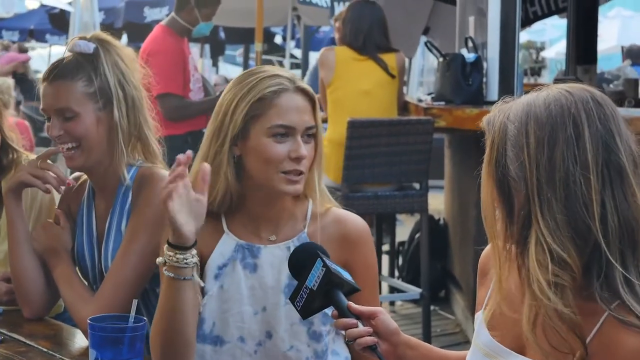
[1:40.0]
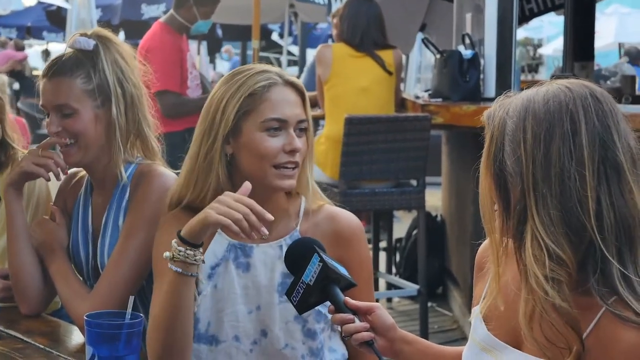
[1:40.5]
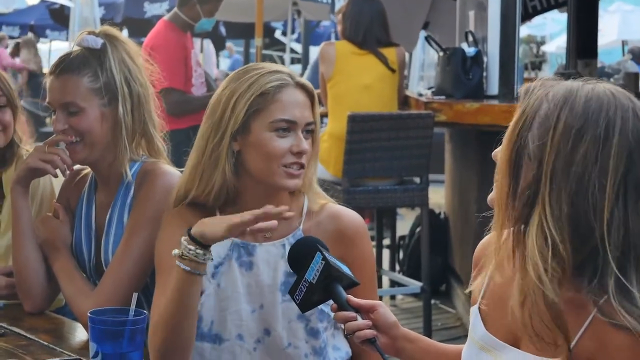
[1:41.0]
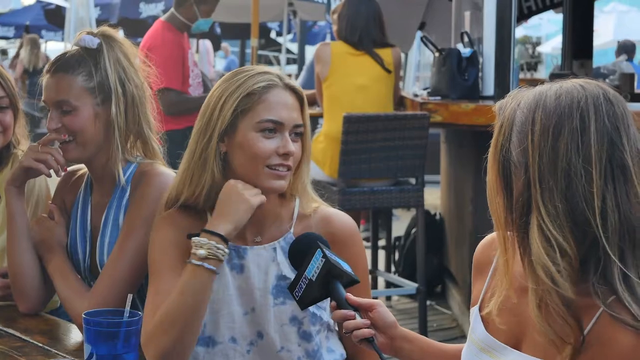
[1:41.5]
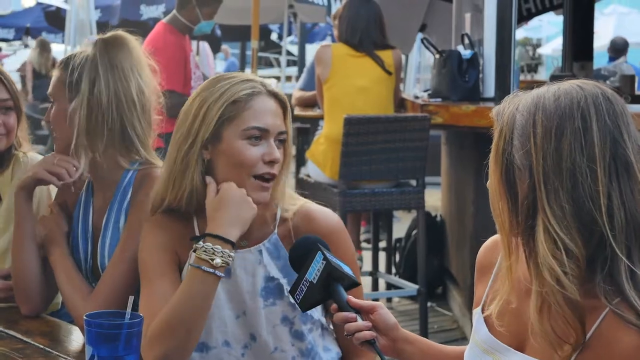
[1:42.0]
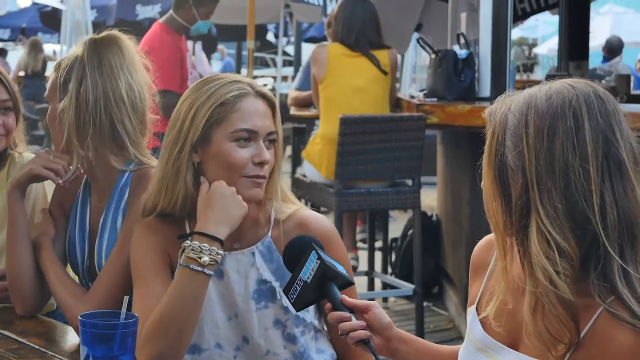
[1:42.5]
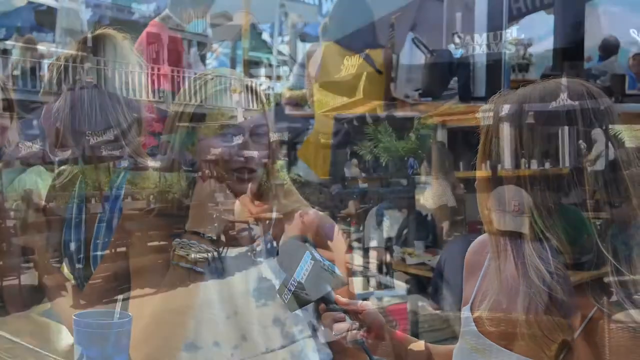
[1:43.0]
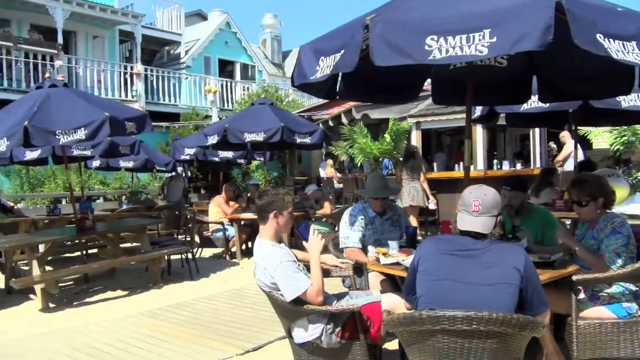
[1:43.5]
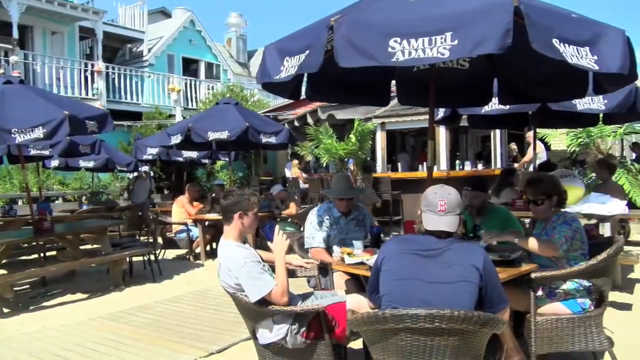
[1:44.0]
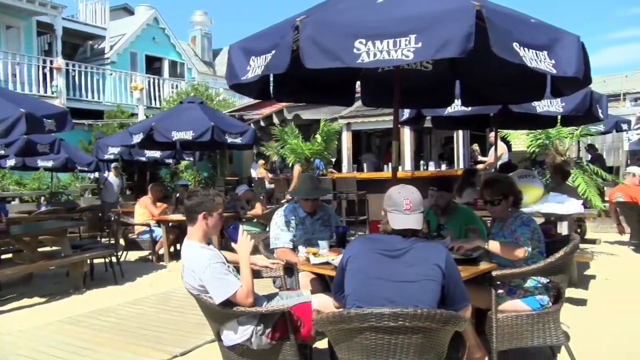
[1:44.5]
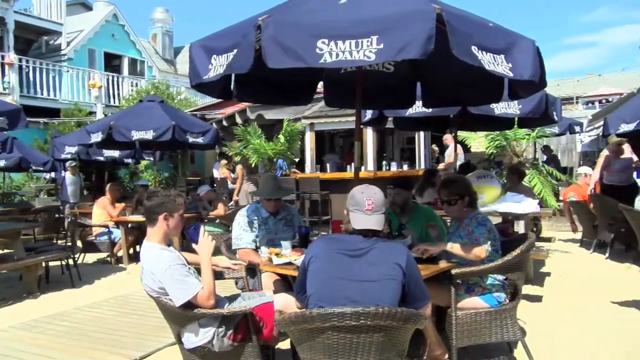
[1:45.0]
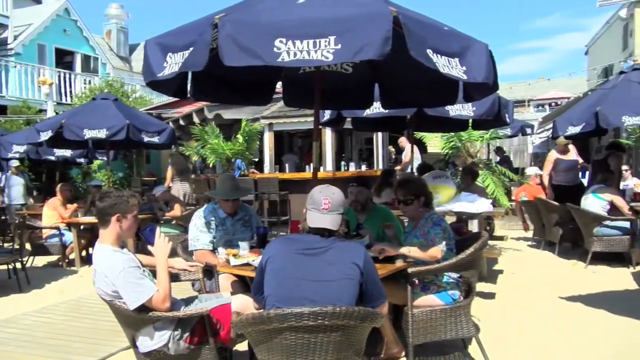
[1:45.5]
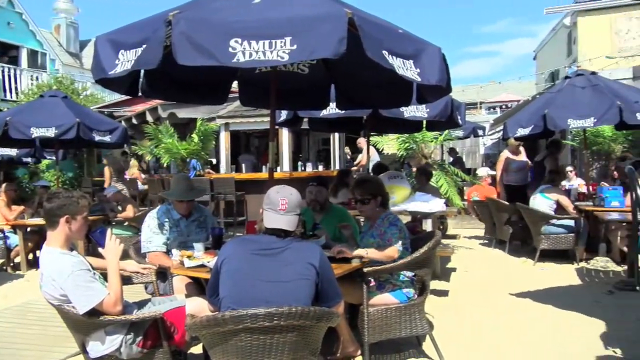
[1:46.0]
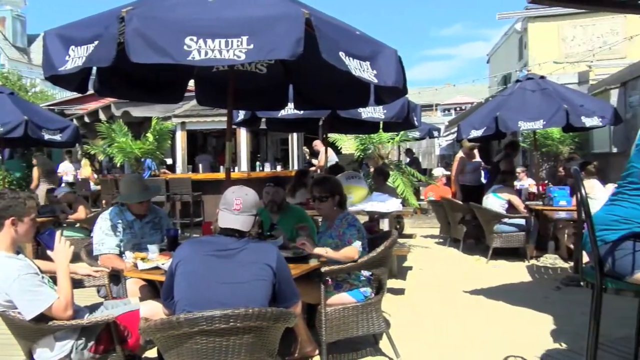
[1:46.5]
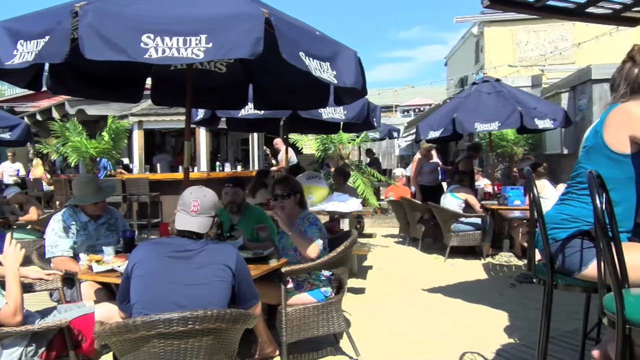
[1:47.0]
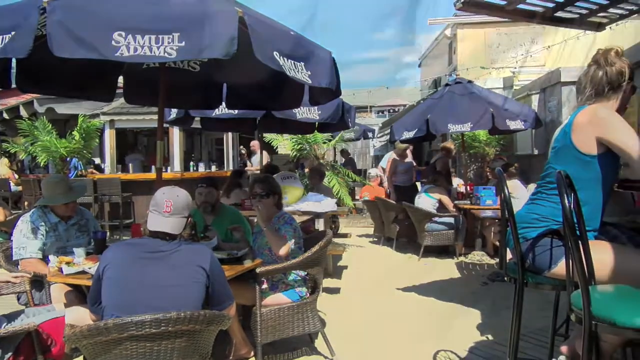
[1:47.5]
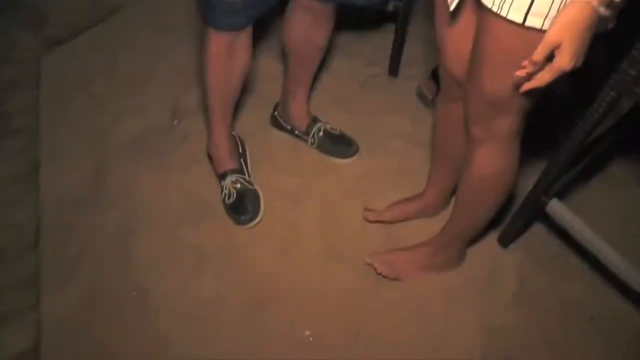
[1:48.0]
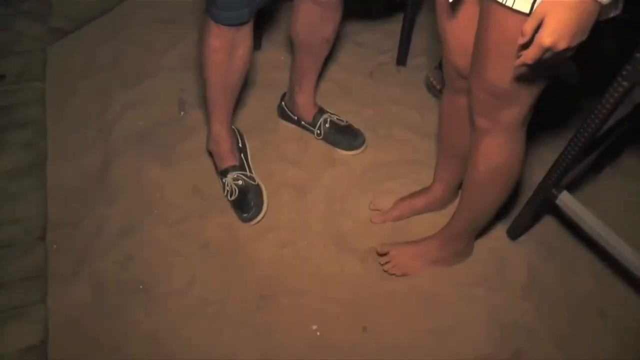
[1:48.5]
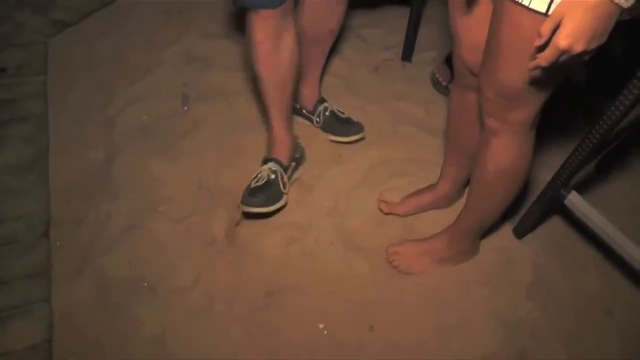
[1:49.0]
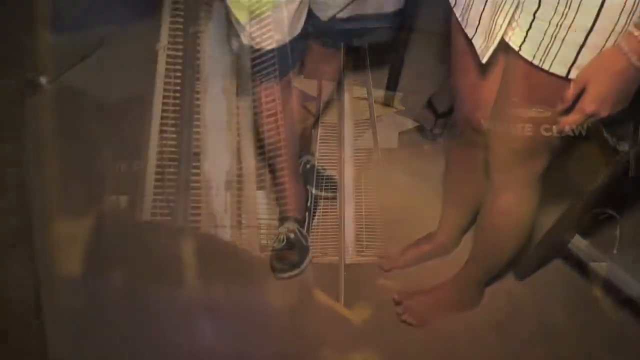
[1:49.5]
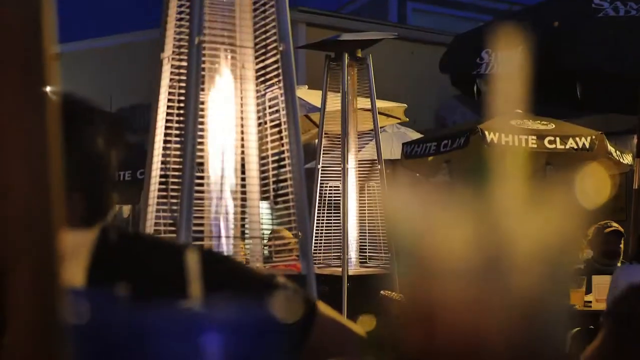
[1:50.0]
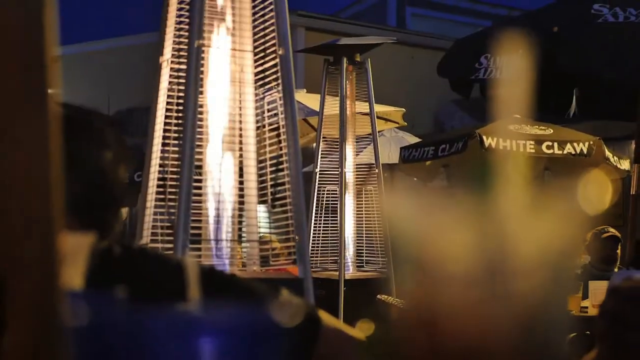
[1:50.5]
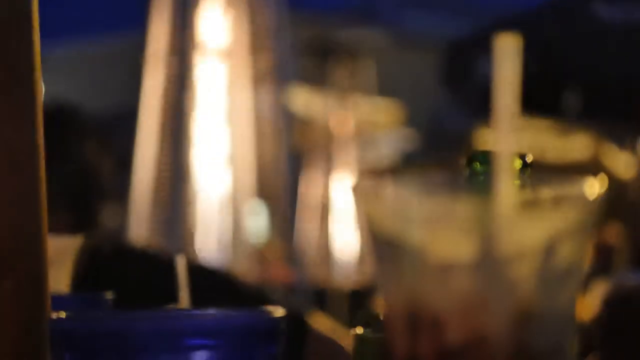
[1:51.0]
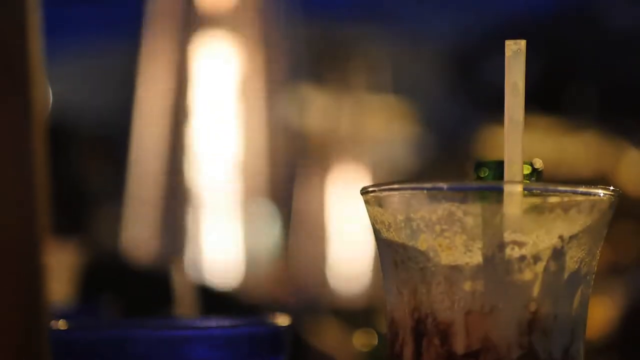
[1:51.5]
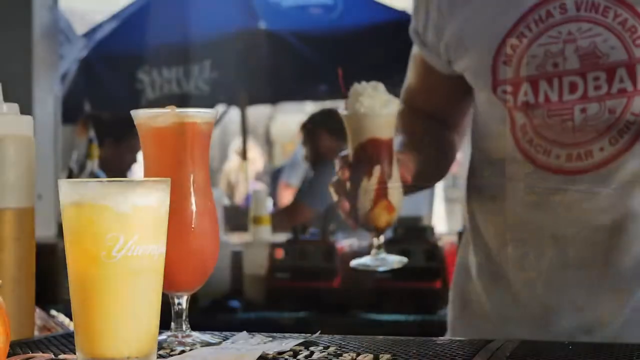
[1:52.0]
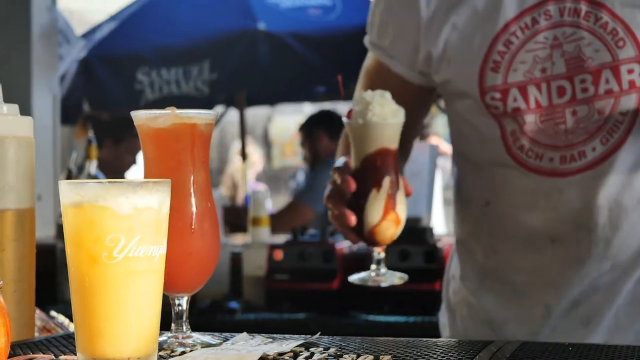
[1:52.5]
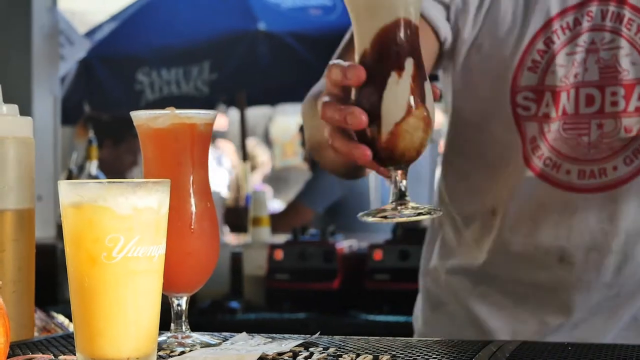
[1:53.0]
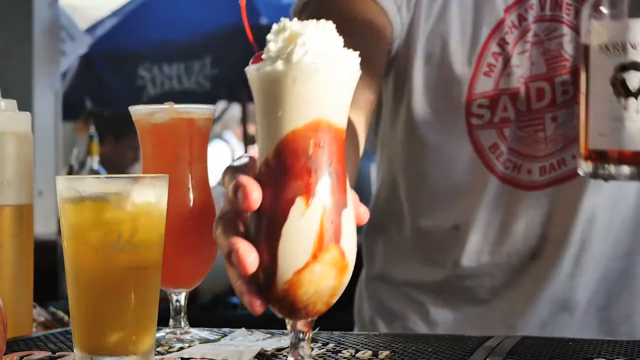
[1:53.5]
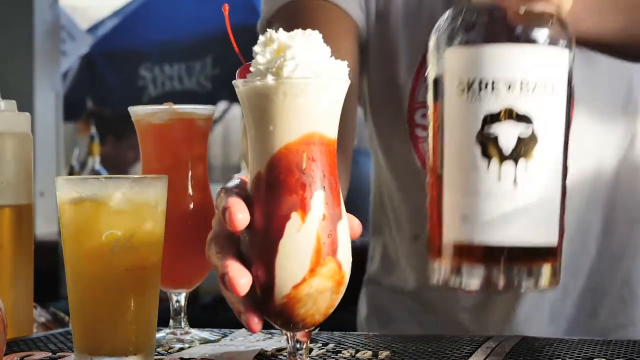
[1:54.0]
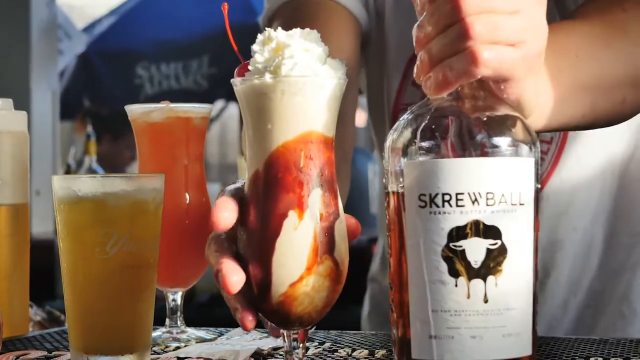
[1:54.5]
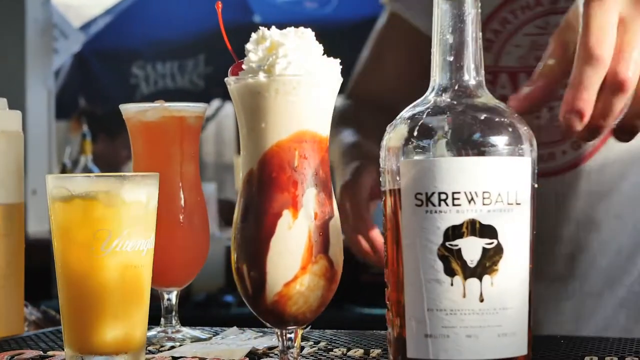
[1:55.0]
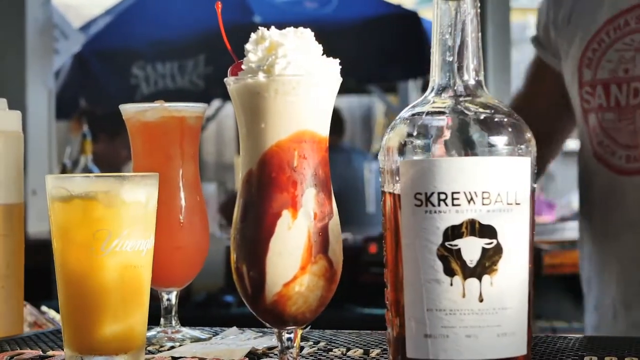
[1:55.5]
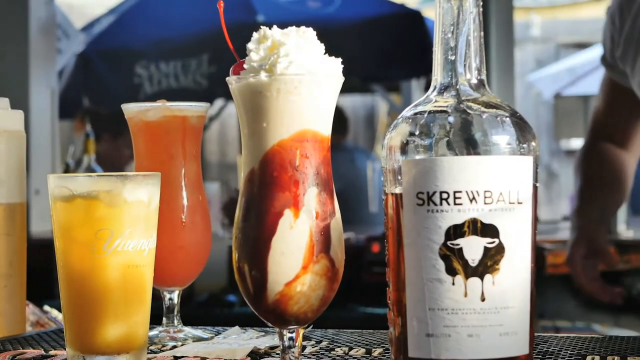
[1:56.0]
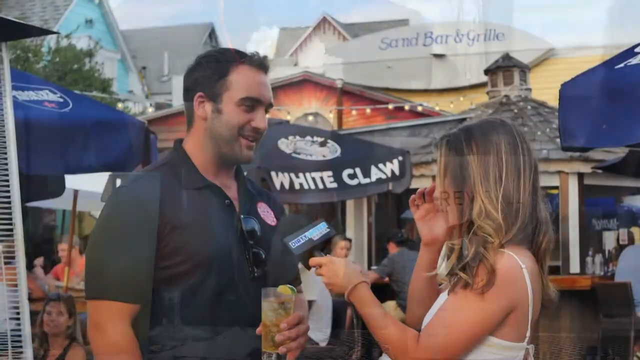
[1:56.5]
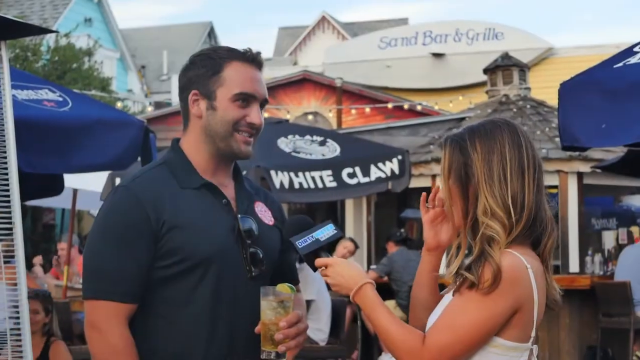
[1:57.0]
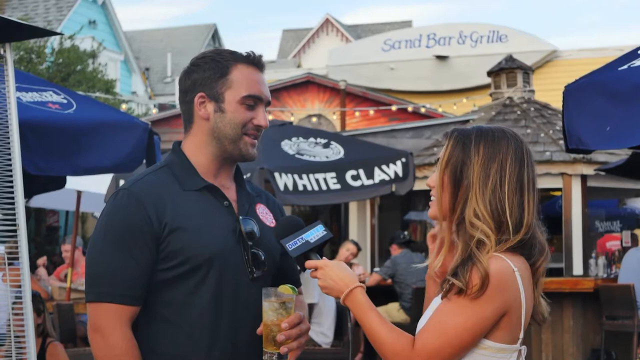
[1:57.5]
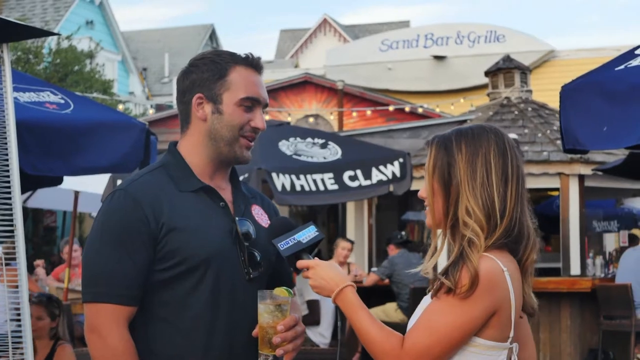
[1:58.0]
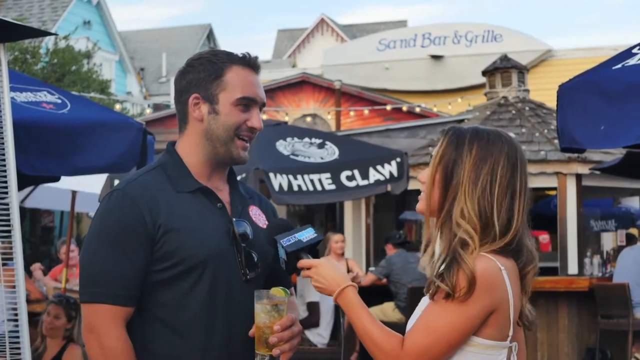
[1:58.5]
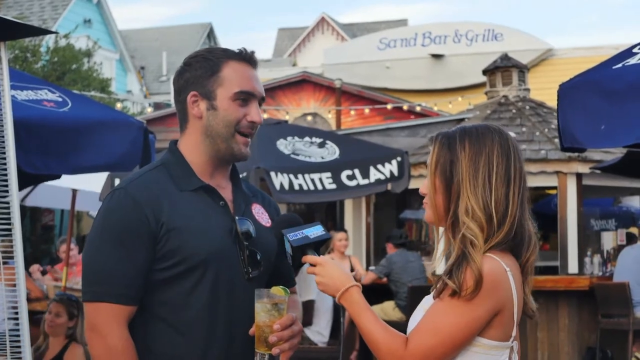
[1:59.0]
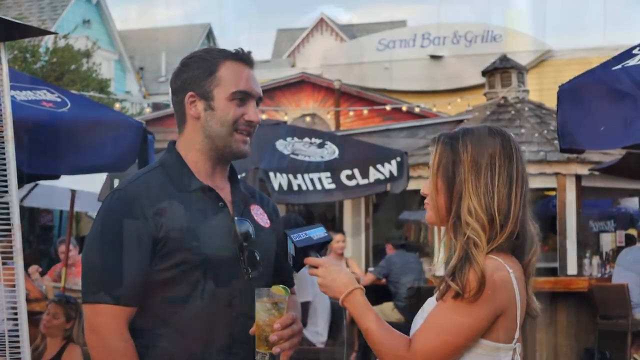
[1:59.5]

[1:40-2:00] A woman in a white top with long blonde hair, wearing bracelets on her right hand, is interviewed and seems to be talking to the reporter in agreement. Then a scene shows blue umbrellas everywhere with people sitting under them and a bar in the background; the blue umbrella has "Samuel Adams" written on it. The camera cuts across to some ladies on the beach, one wearing blue flat shoes and another without shoes, her toes in the sand. The scene looks dark, as if it was taken at night. Later, at a bar, a bartender serves ice cream in a tall glass and puts a bottle of "SKWBALL" on the table.